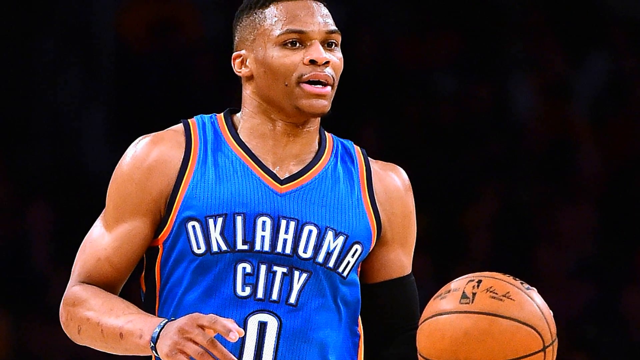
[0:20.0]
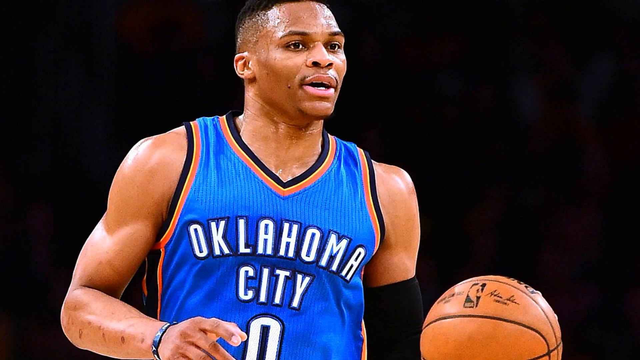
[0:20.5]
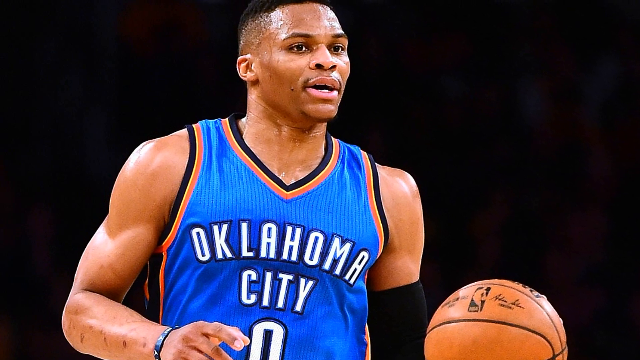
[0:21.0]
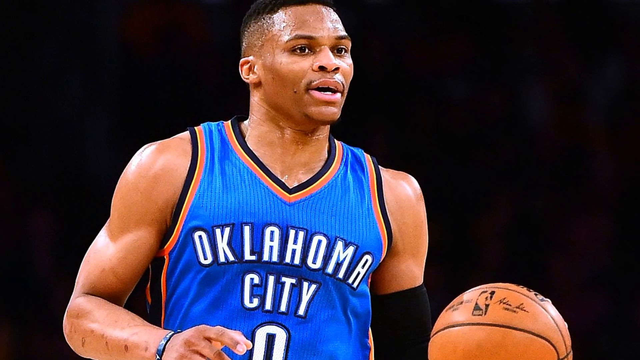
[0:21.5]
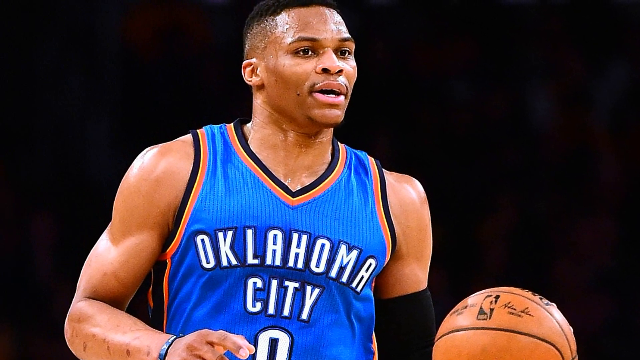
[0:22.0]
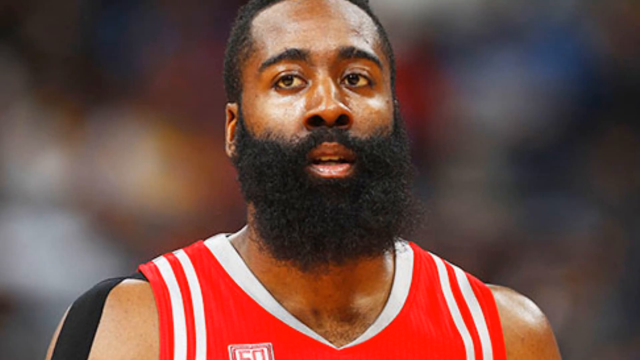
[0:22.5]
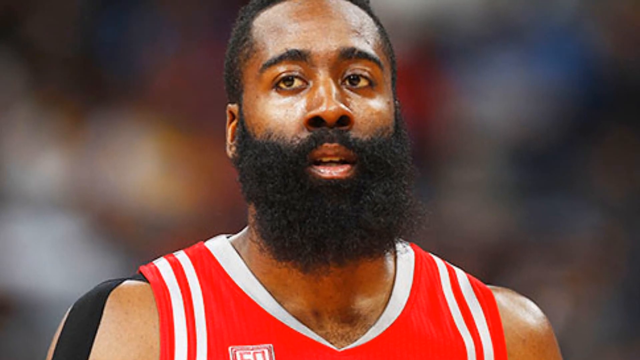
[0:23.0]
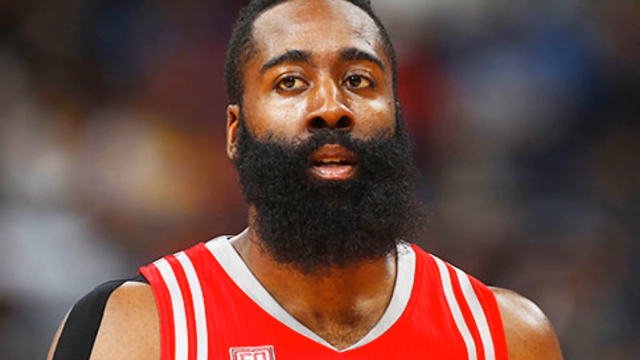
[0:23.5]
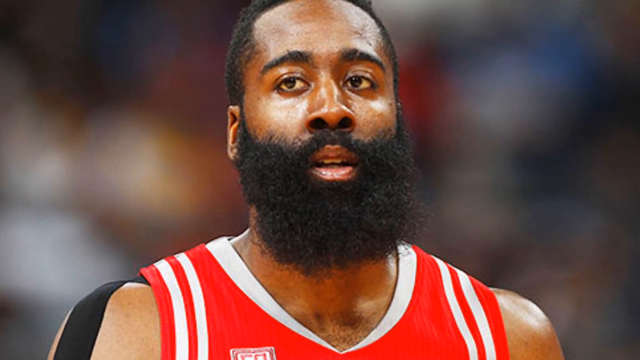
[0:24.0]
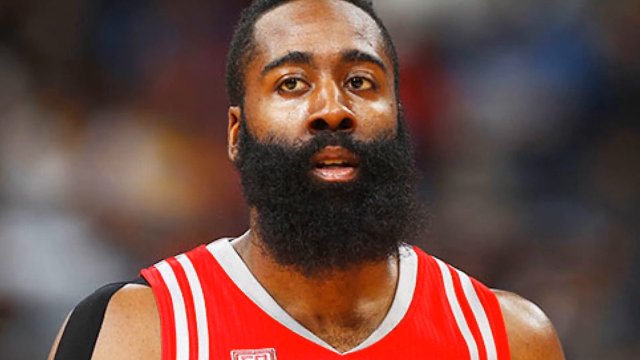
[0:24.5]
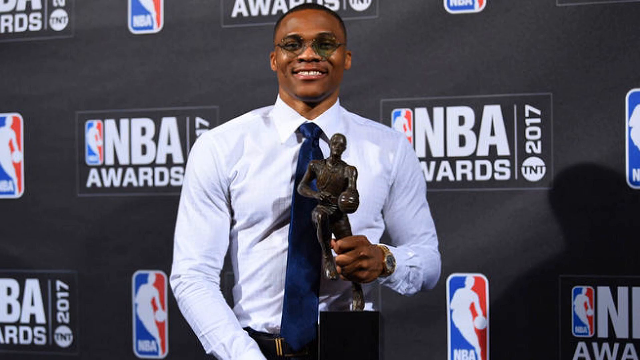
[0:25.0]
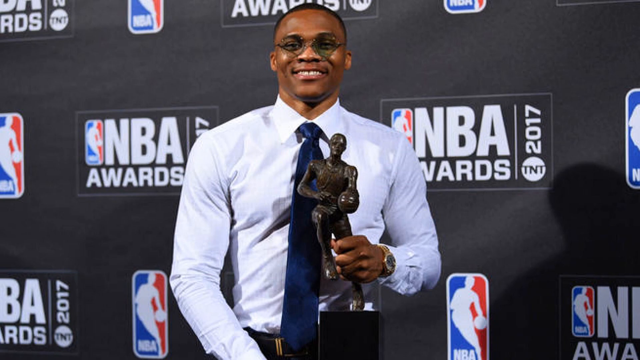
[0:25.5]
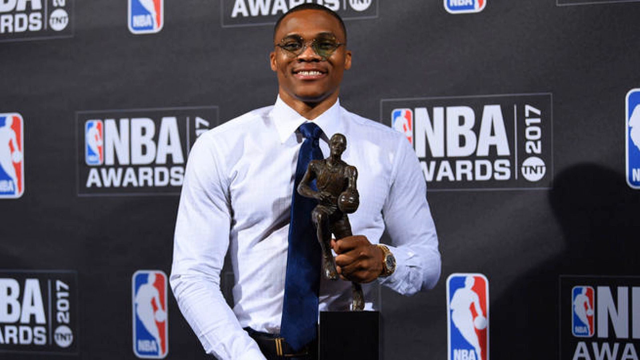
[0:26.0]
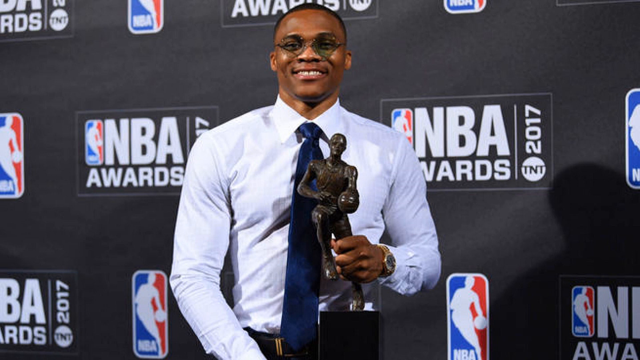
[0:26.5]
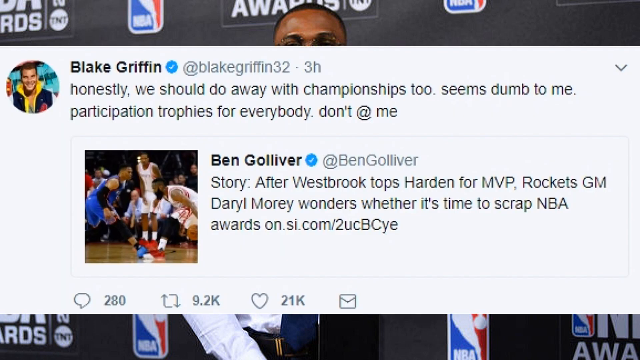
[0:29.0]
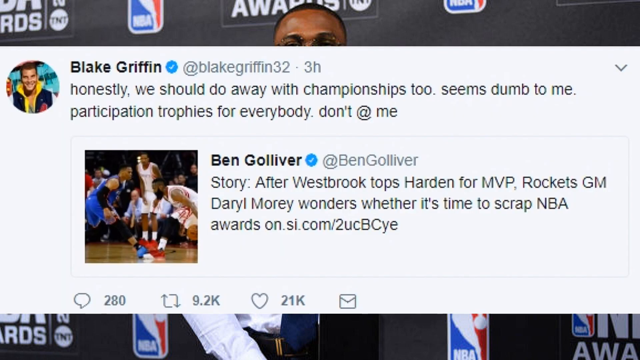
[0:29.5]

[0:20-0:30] Russell Westbrook appears in front of a pitch black background, so that only he is in focus. The video quickly transitions to a shot of James Harden in front of a completely blurred background, leaving only his face visible. It then quickly cuts back to Russell Westbrook, who wears a suit and glasses and holds up a trophy; text reads "NBA Awards" from 2017, sponsored by TNT.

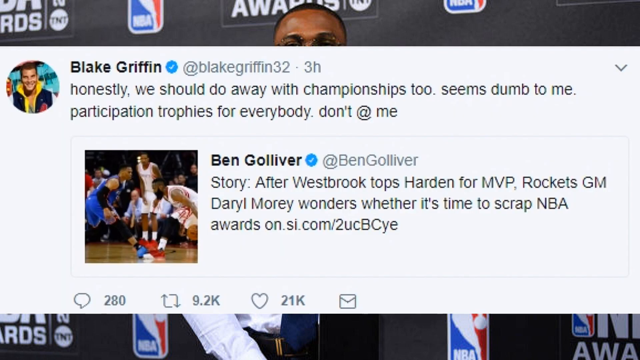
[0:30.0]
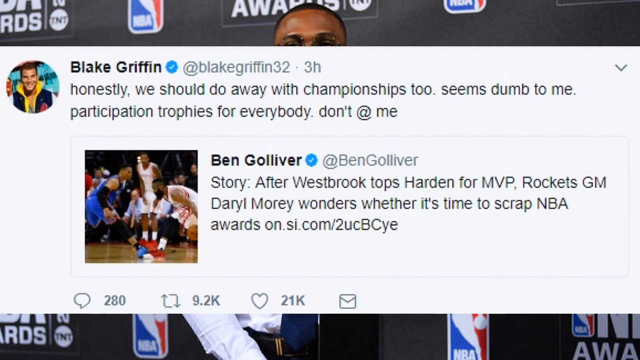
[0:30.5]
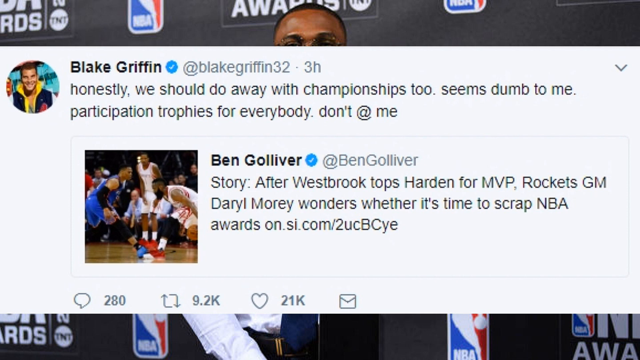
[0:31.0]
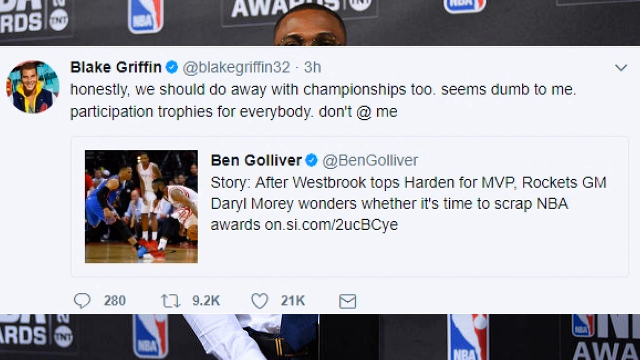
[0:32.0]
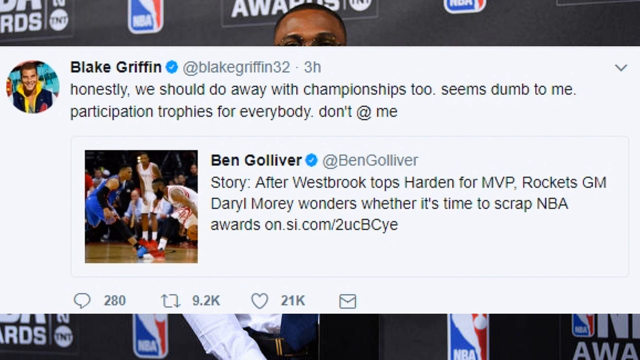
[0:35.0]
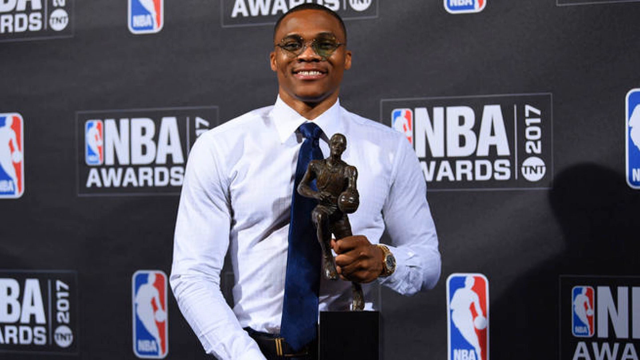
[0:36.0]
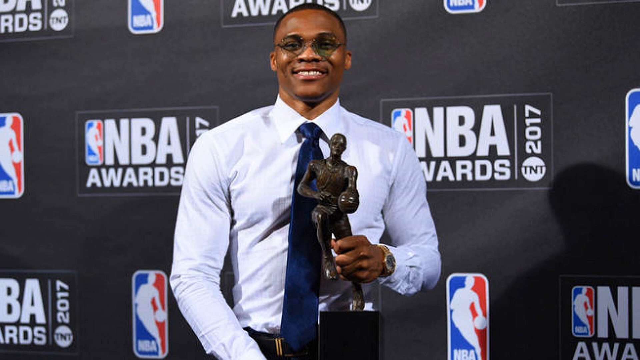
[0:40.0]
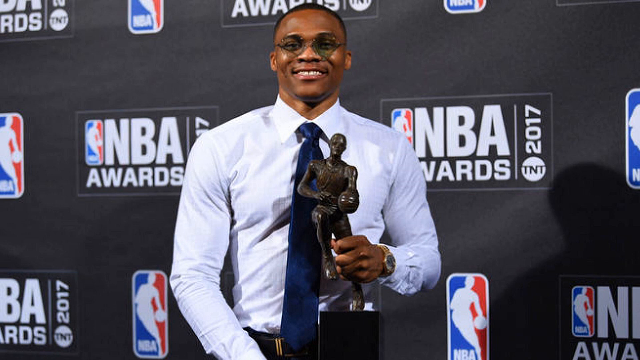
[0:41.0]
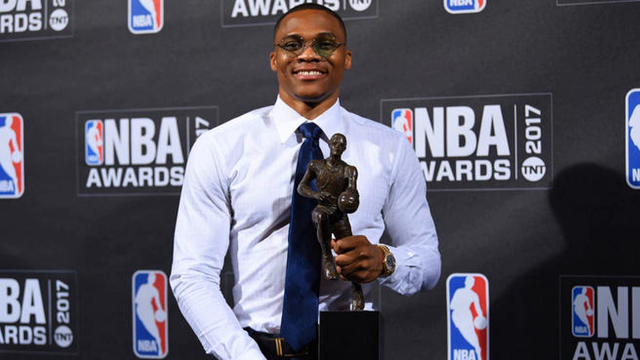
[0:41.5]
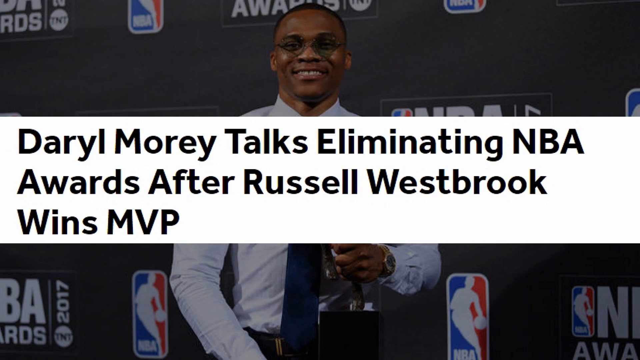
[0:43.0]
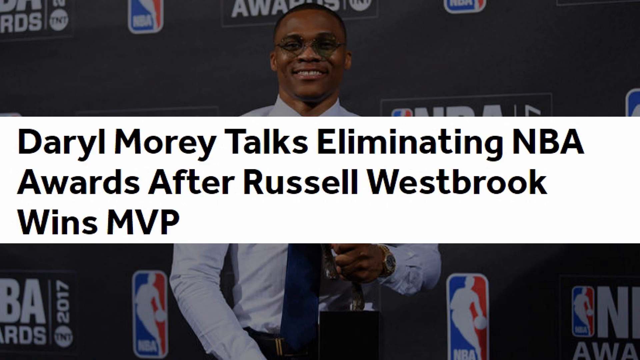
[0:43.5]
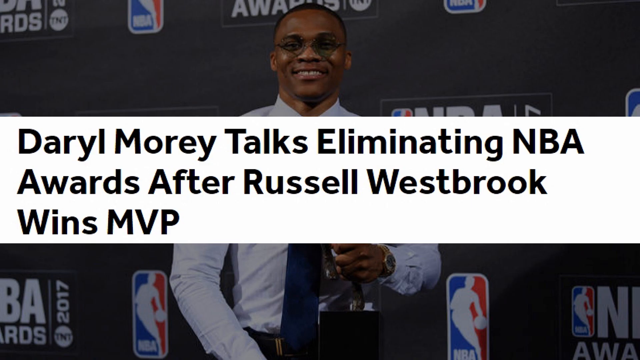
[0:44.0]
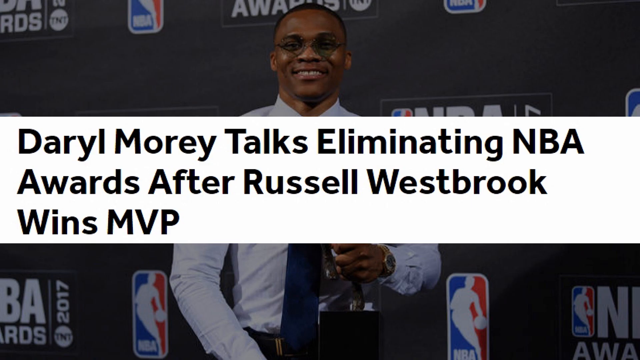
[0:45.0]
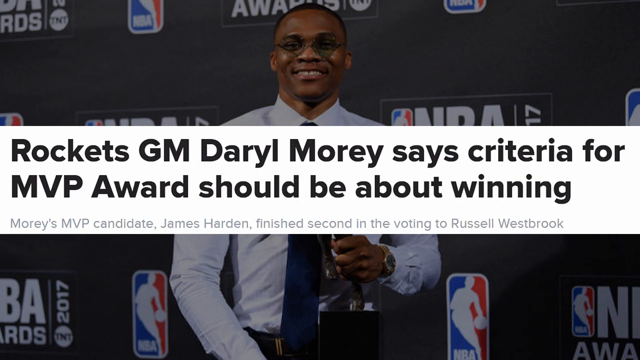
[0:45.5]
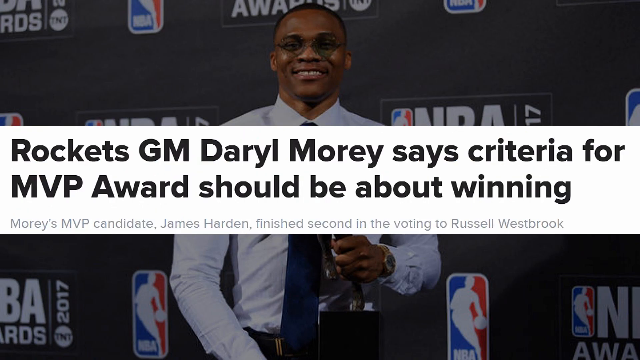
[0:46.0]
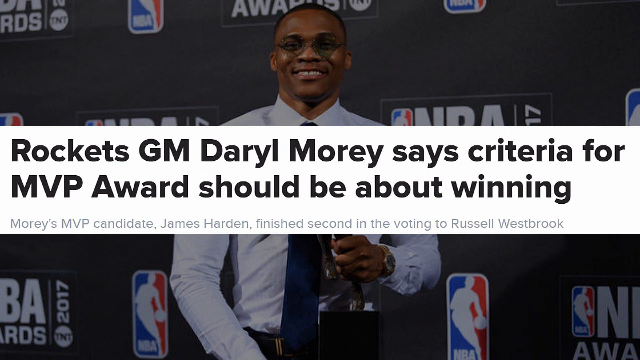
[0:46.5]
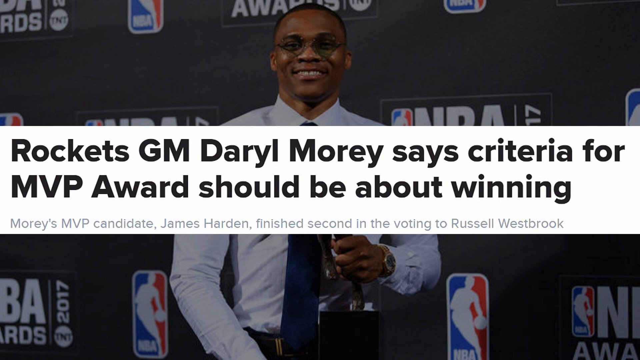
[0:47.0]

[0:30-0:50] A screenshot of what appears to be a tweet from basketball player Blake Griffin reads: "Honestly, we should do away with championships too, it seems dumb to me. Participation trophies for everybody, don't at me." Further text follows that mentions Westbrook, MVP, and "Rockets General Manager, Darryl Morey."